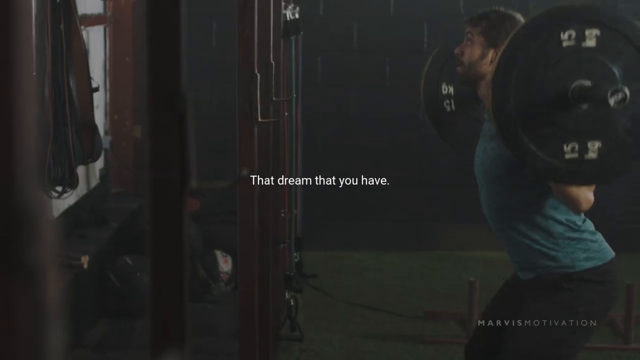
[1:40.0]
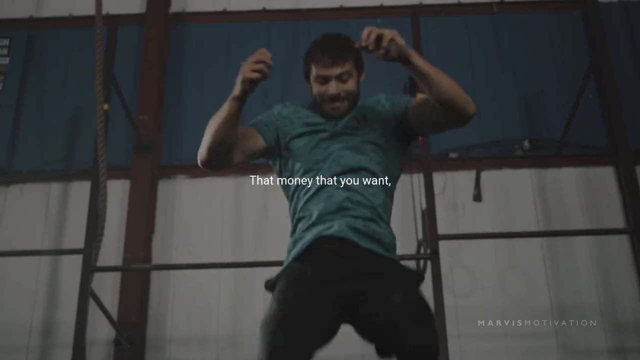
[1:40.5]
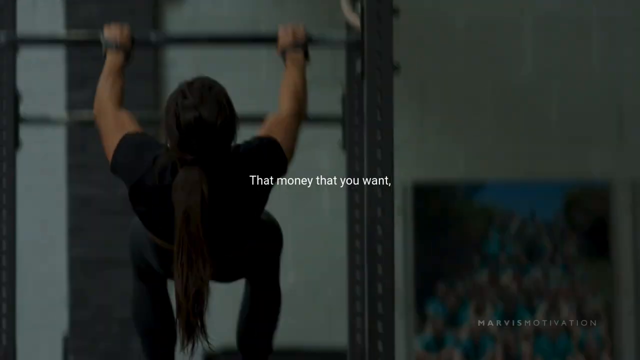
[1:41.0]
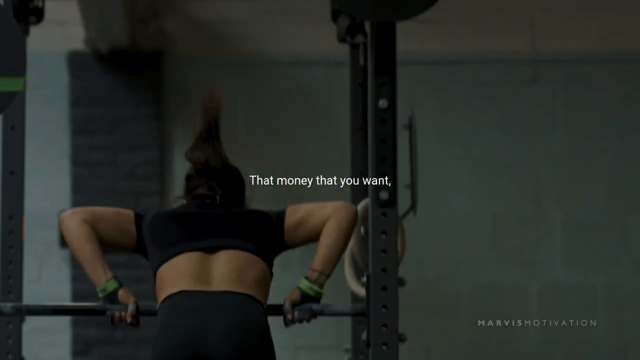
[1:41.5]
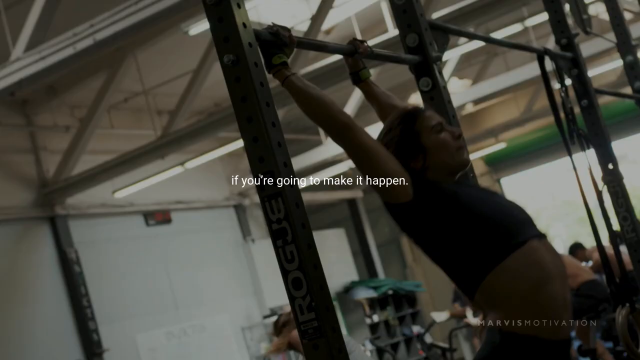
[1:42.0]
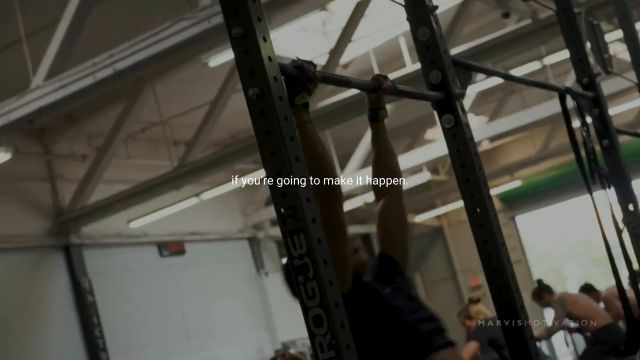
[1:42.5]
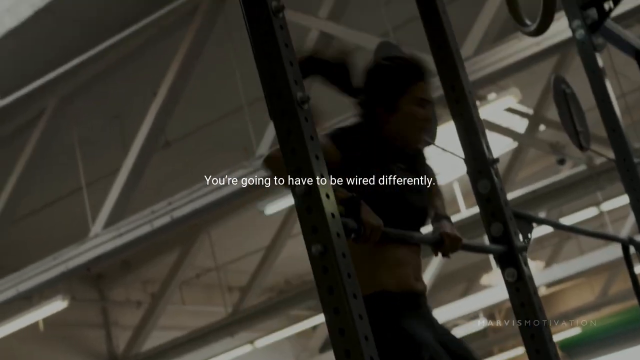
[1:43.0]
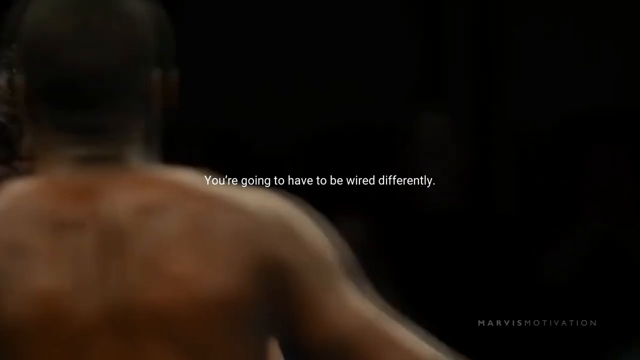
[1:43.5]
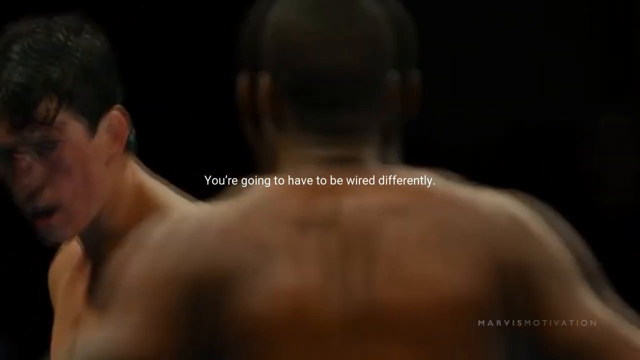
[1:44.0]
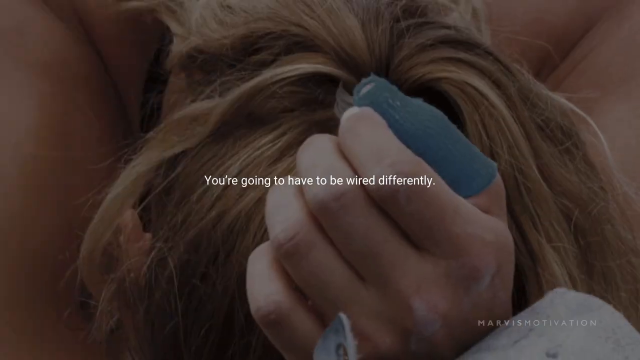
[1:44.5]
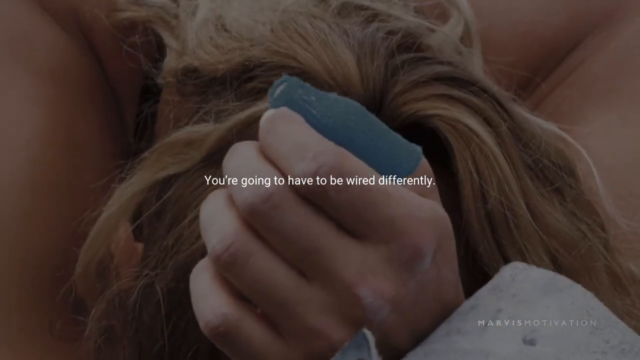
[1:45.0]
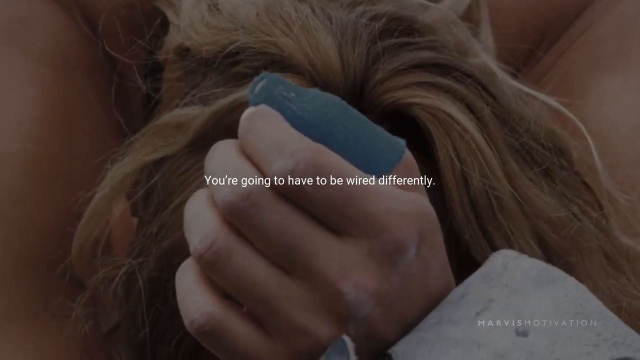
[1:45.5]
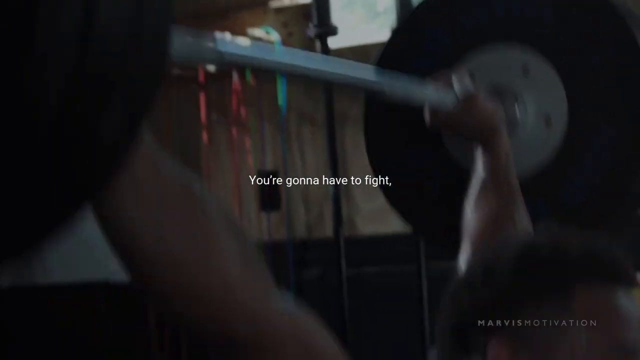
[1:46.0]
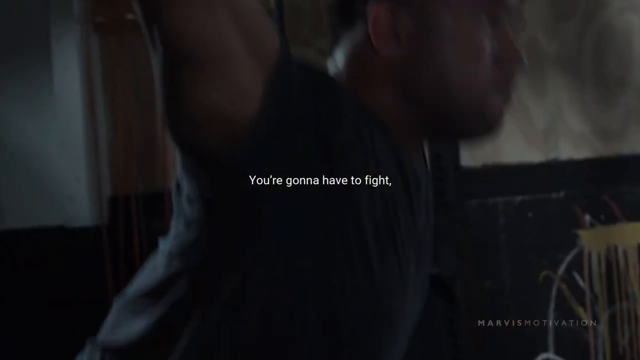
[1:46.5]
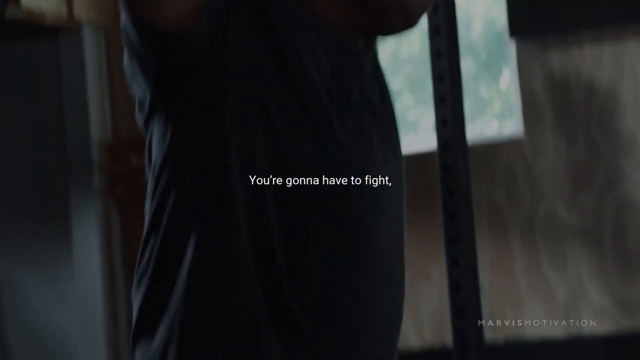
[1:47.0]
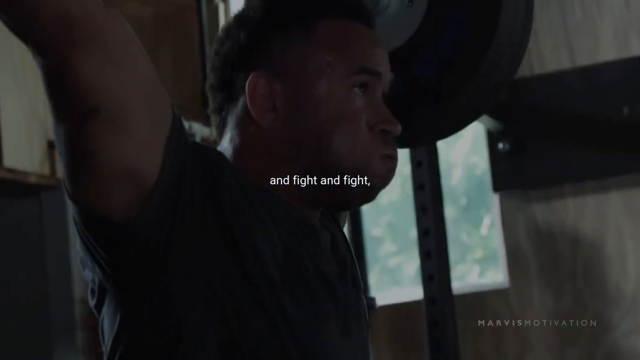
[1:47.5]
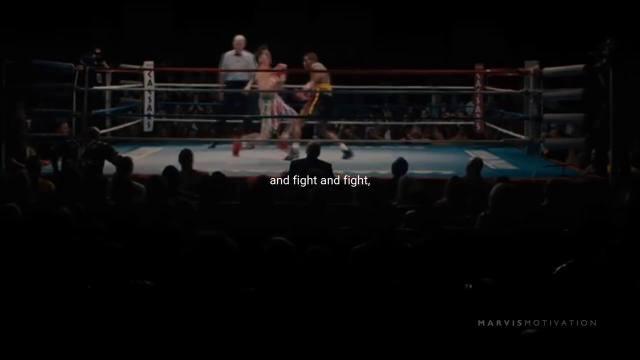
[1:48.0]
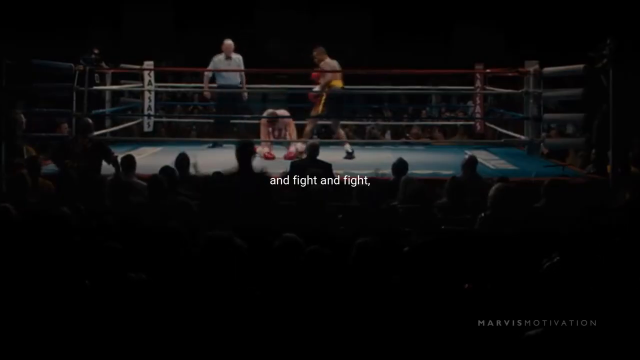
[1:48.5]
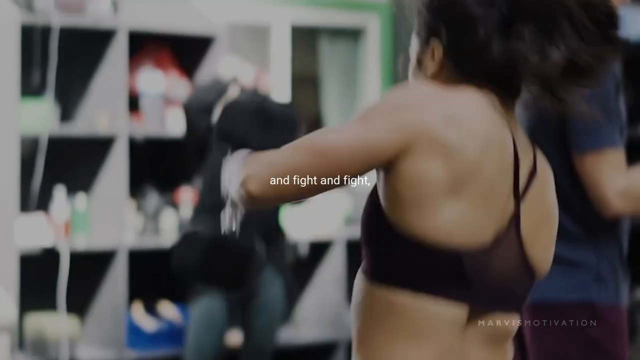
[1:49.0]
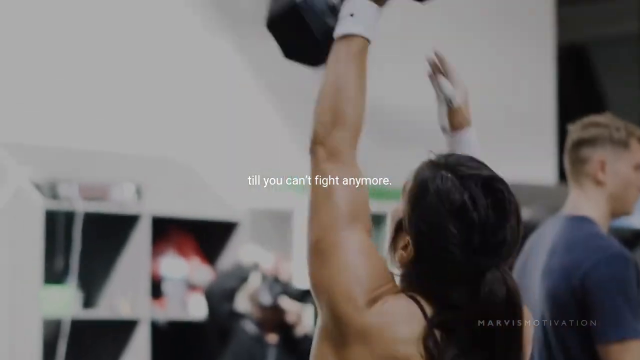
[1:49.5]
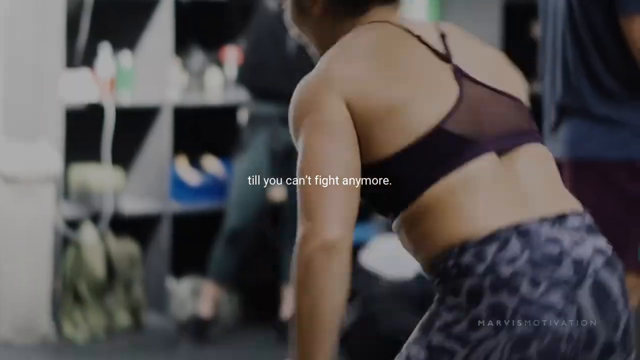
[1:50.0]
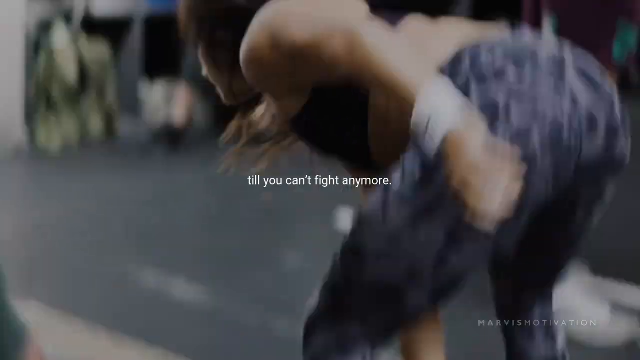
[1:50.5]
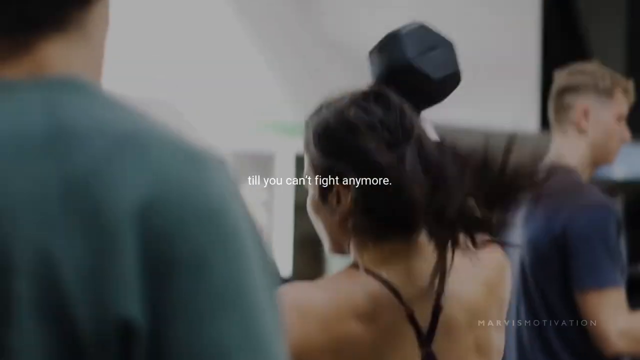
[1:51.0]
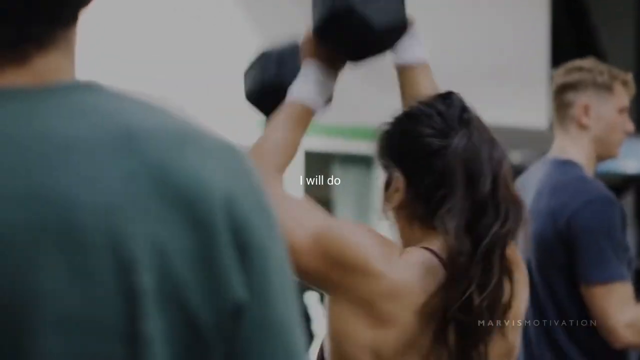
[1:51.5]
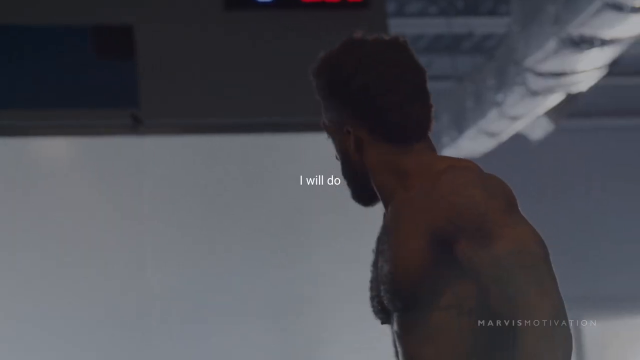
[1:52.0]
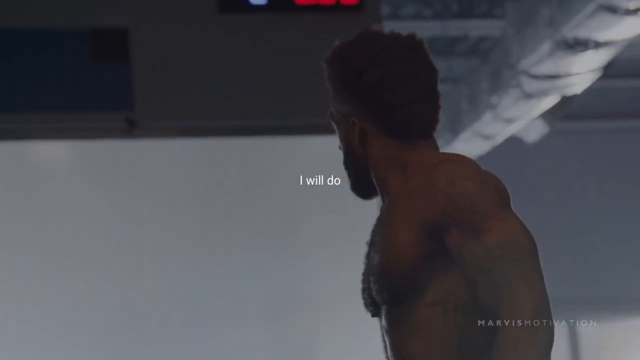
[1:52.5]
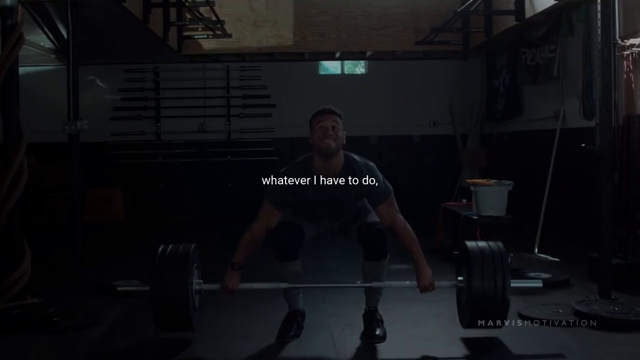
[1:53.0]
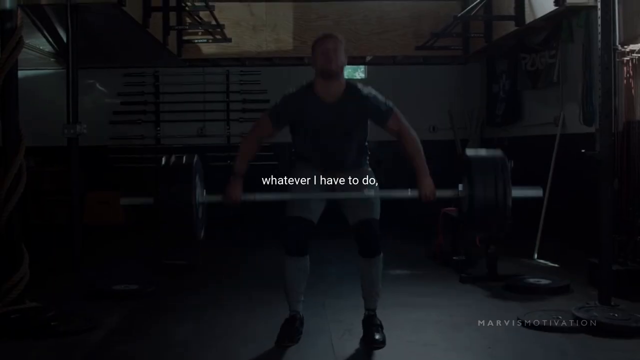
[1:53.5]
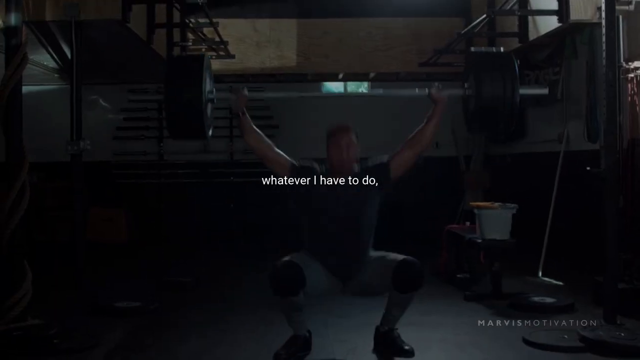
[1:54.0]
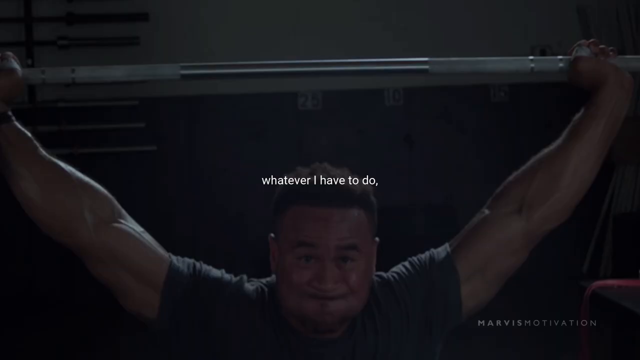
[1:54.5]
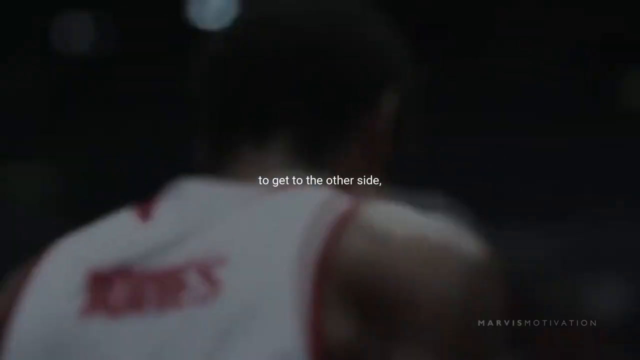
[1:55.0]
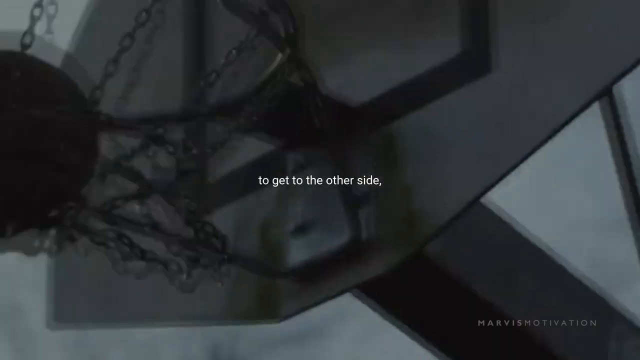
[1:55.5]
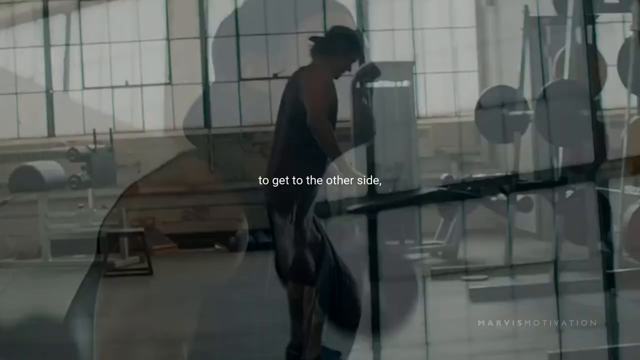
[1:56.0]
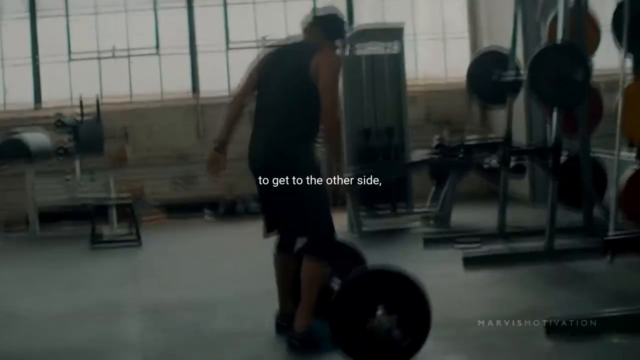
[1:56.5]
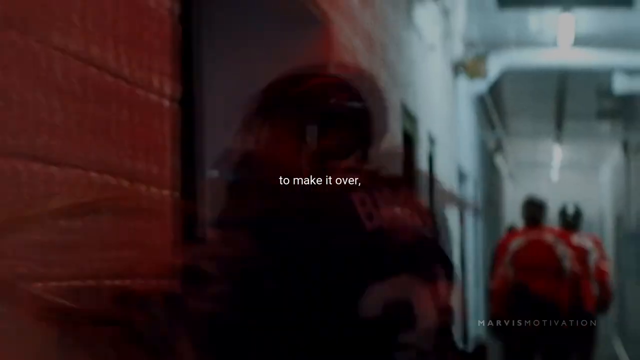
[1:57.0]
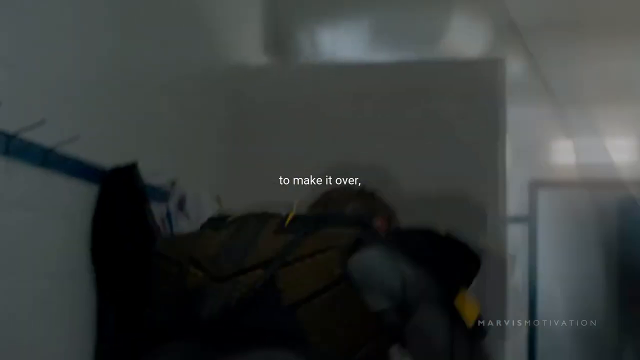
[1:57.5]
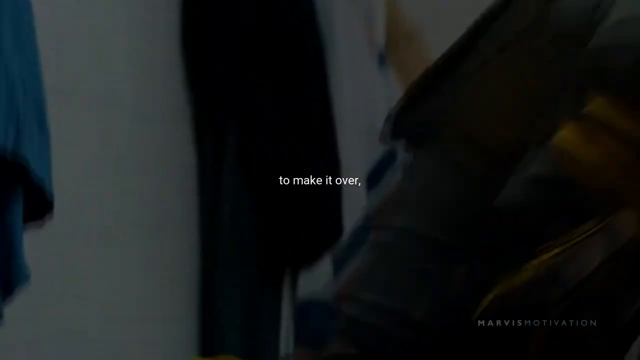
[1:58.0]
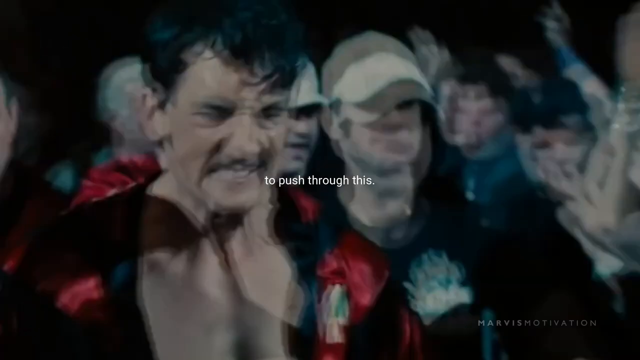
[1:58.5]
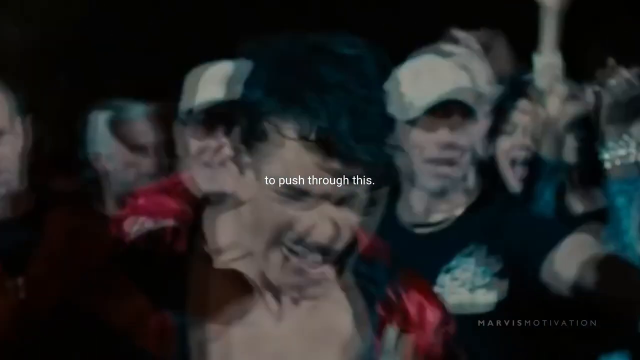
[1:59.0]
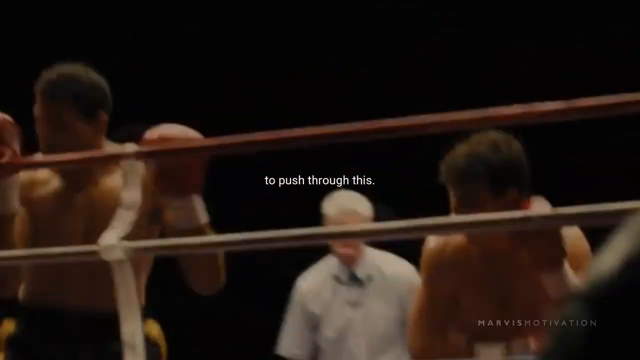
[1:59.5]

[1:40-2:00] White text appears as a male in a blue shirt and black pants lifts weights, with text reading "This is that dream that you have"; he then jumps. Another scene shows an individual in a black outfit lifting weights and doing pull-ups, and a female. White text reads "you're going to have to be wired differently" as two individuals are shown: Miles Teller, and a black individual boxing in a boxing ring. A female is shown, then an individual lifting weights, an individual getting knocked out in a boxing ring, and a female lifting a sort of dumbbell-like weight. Text reads "till you can't fight anymore," then white text reads "I will do," and the motivational-style video continues transitioning between many subjects and settings related to exercise.